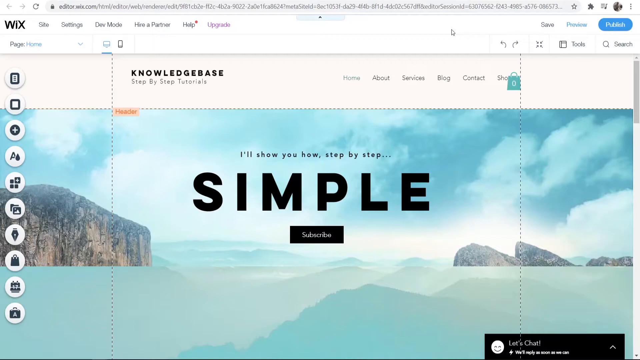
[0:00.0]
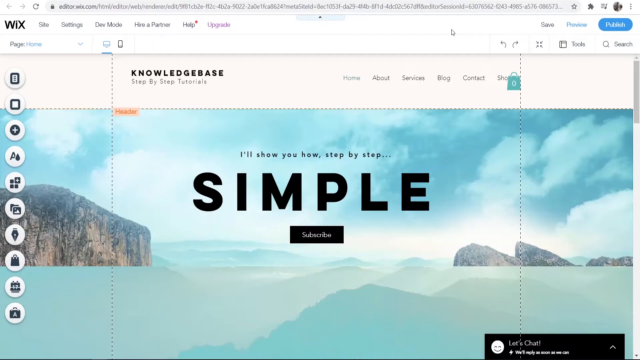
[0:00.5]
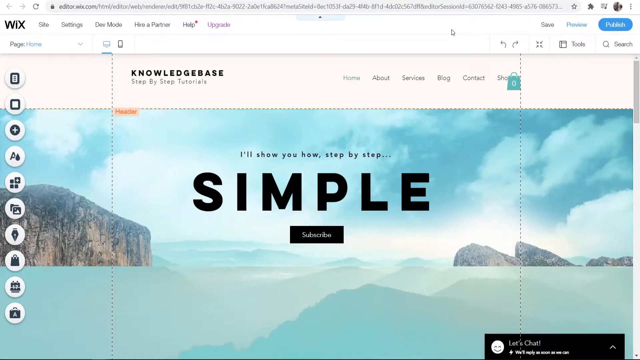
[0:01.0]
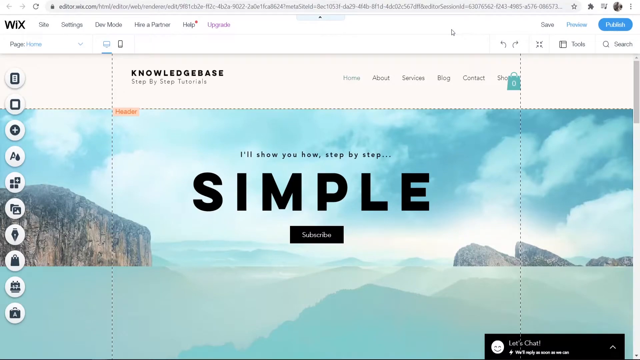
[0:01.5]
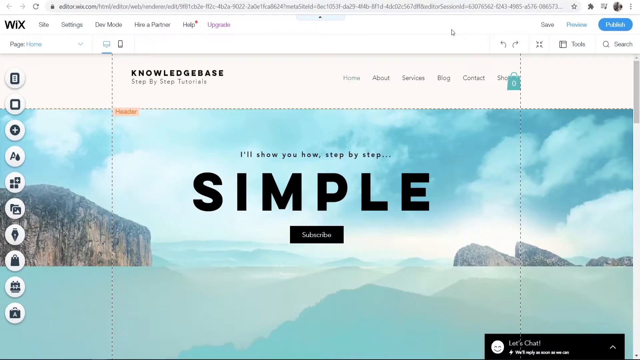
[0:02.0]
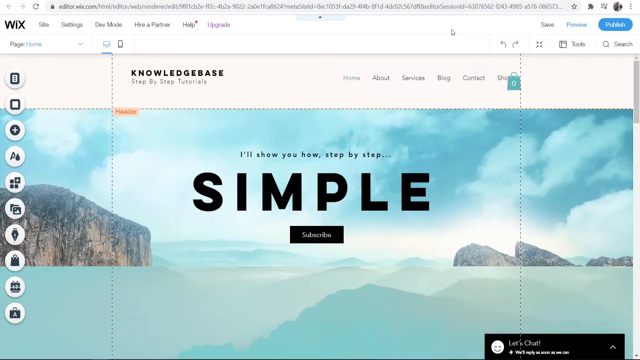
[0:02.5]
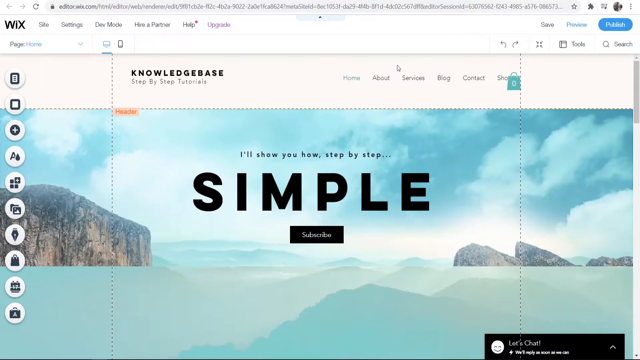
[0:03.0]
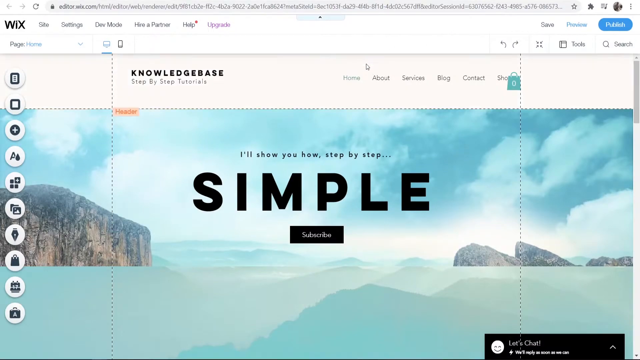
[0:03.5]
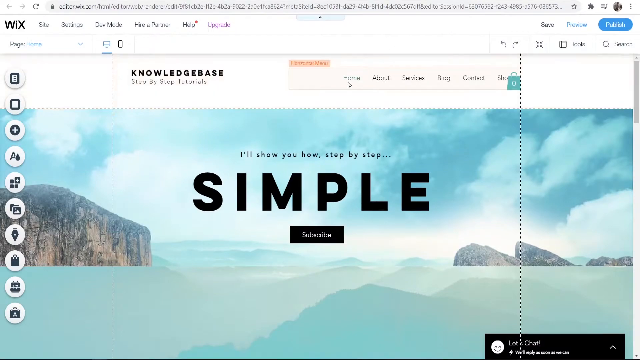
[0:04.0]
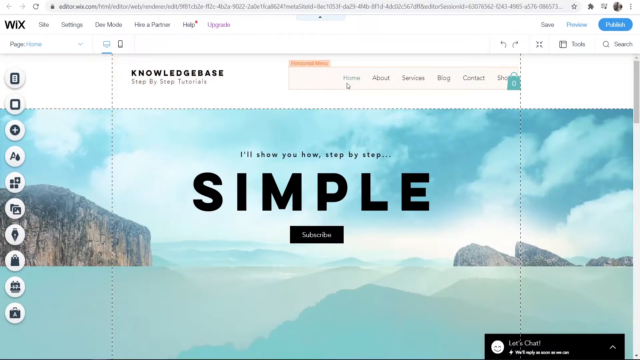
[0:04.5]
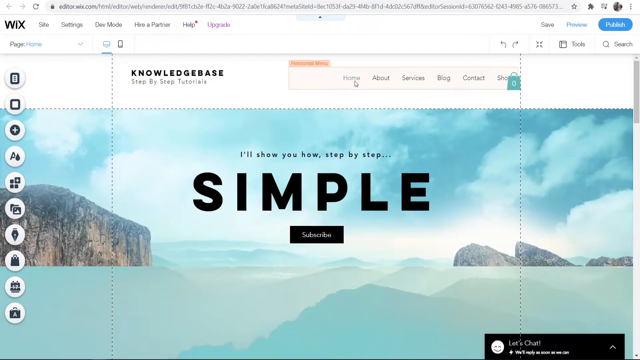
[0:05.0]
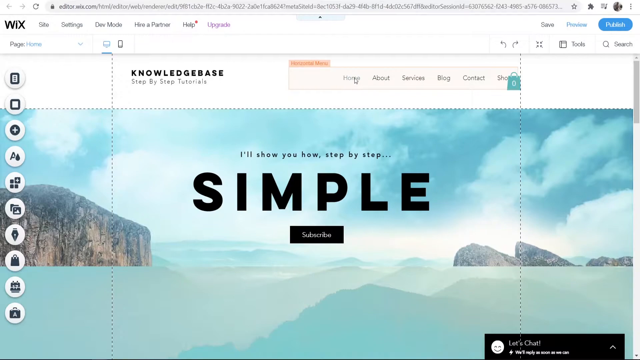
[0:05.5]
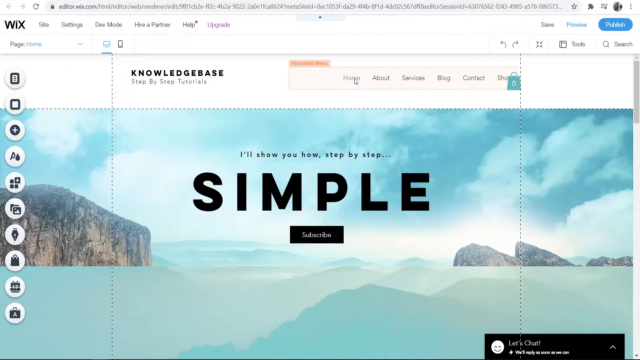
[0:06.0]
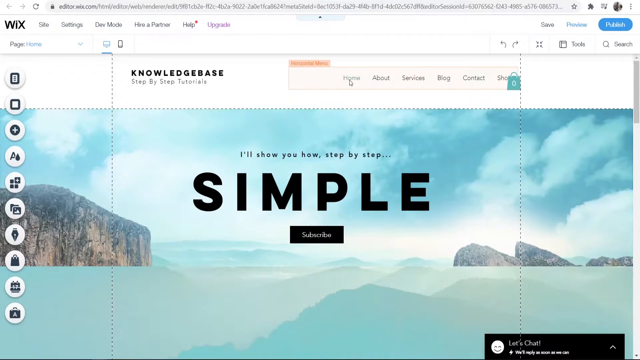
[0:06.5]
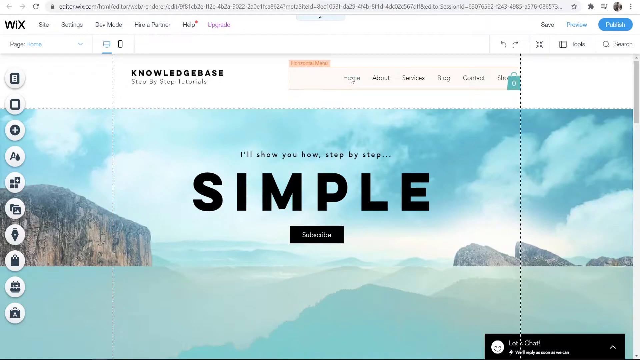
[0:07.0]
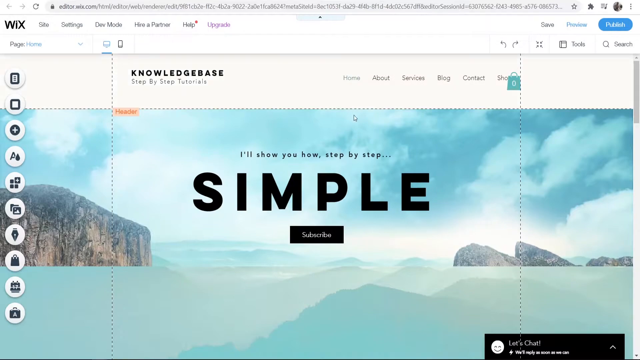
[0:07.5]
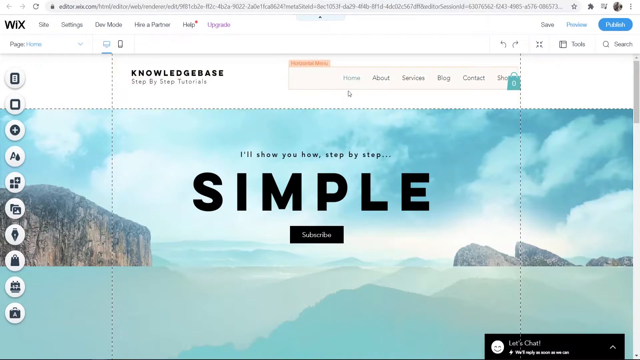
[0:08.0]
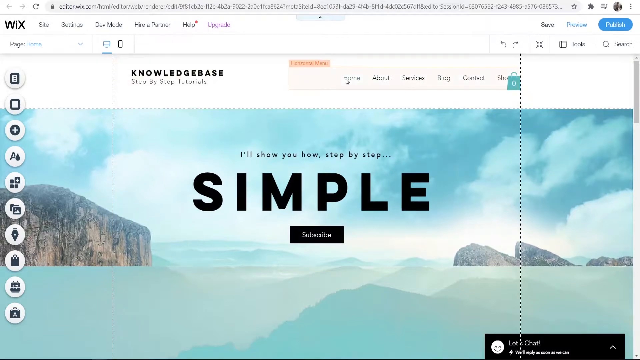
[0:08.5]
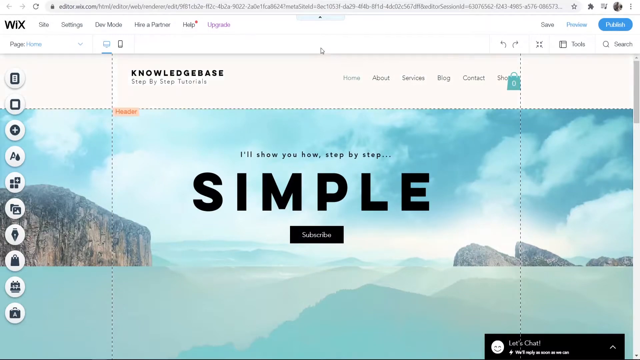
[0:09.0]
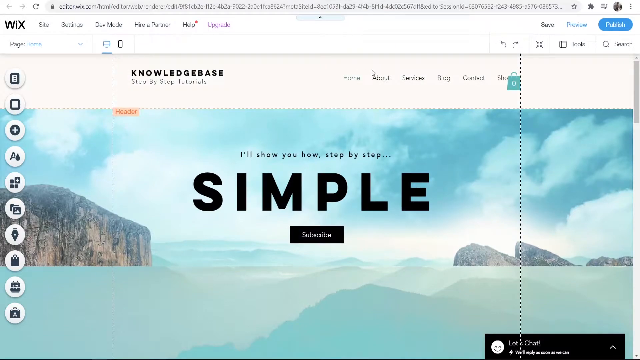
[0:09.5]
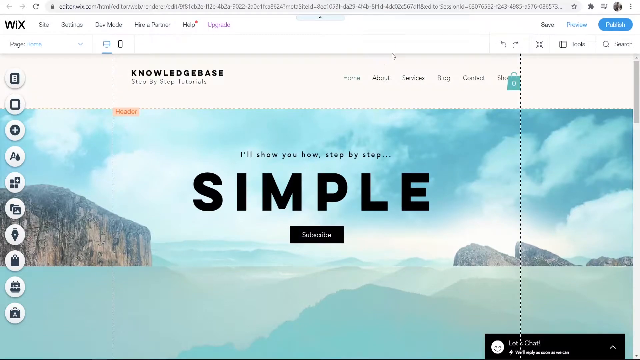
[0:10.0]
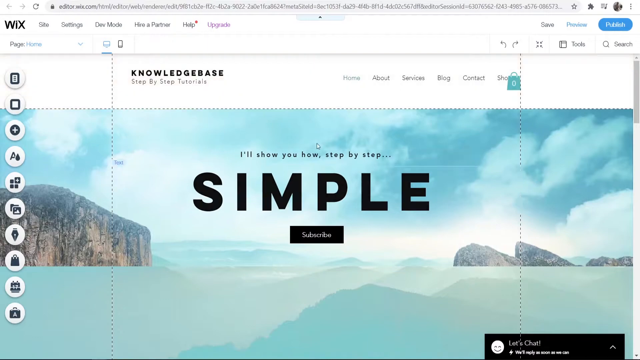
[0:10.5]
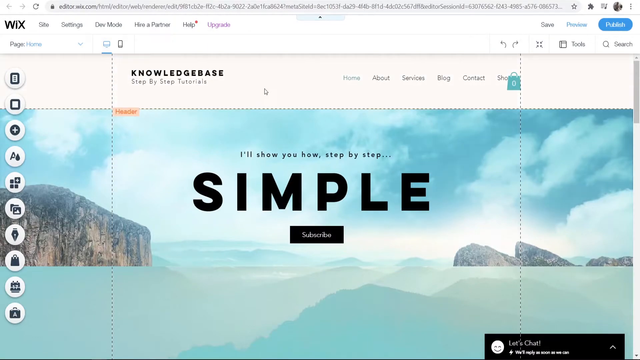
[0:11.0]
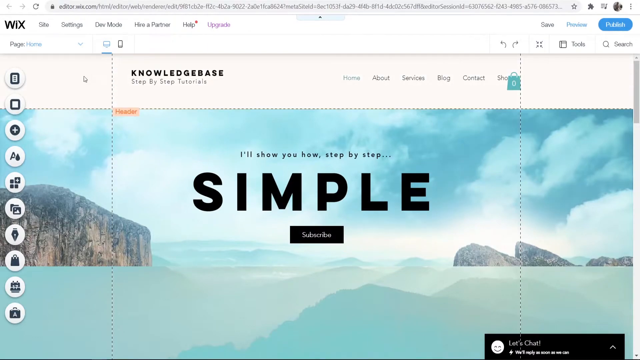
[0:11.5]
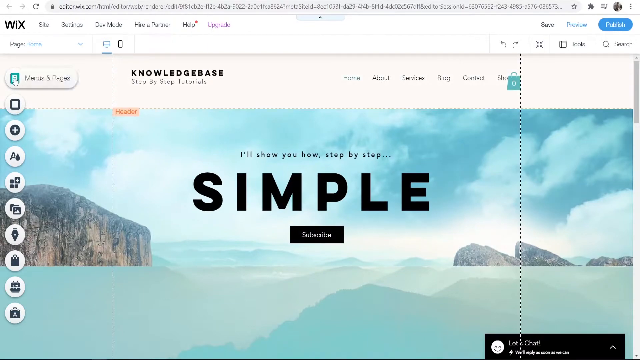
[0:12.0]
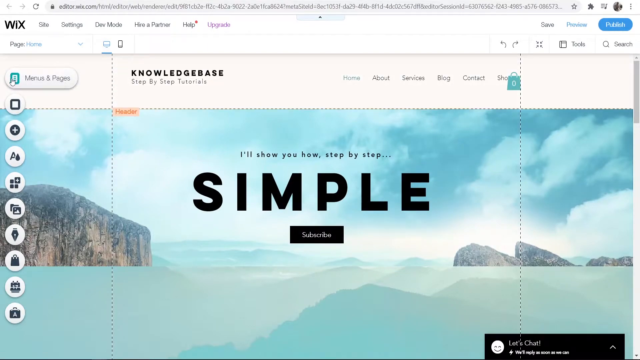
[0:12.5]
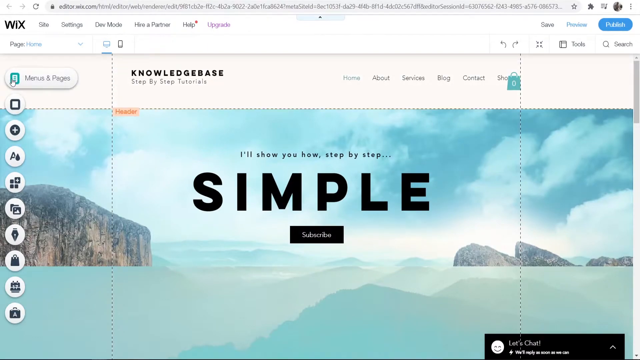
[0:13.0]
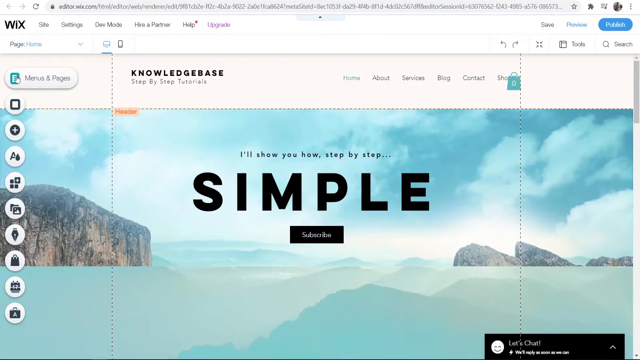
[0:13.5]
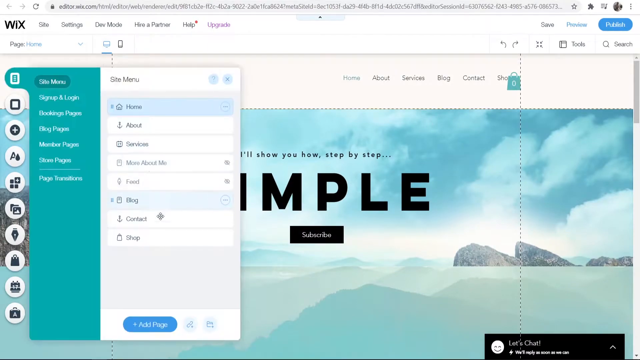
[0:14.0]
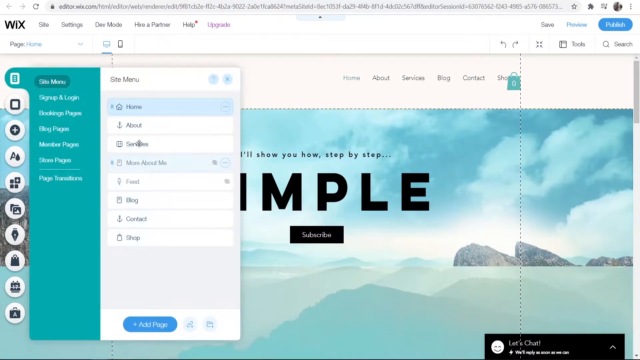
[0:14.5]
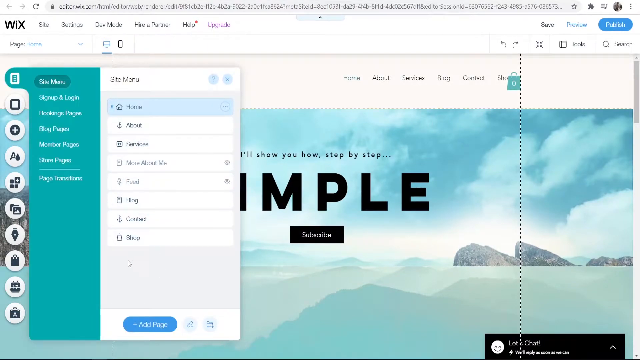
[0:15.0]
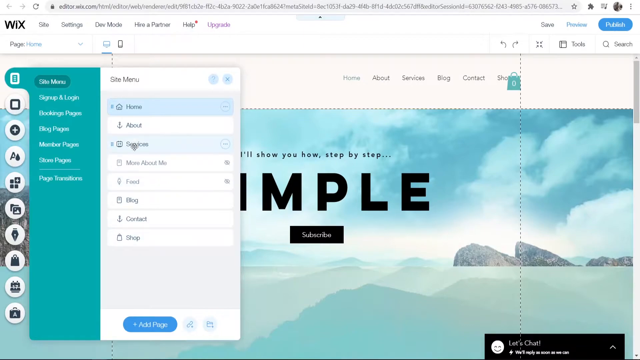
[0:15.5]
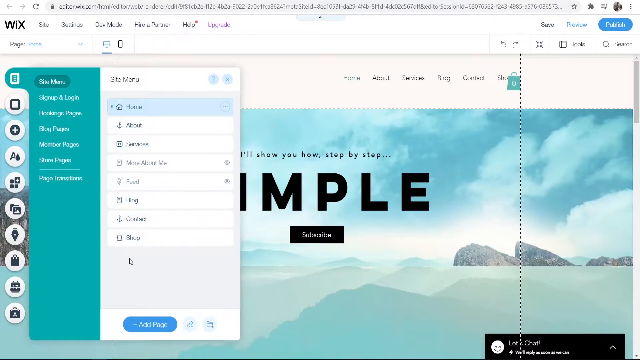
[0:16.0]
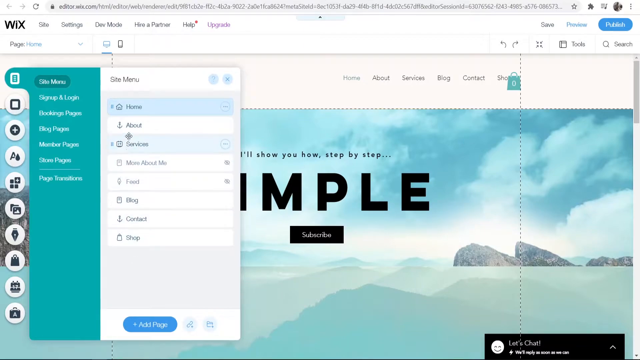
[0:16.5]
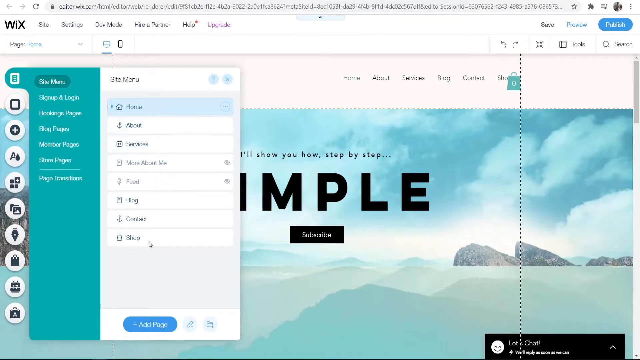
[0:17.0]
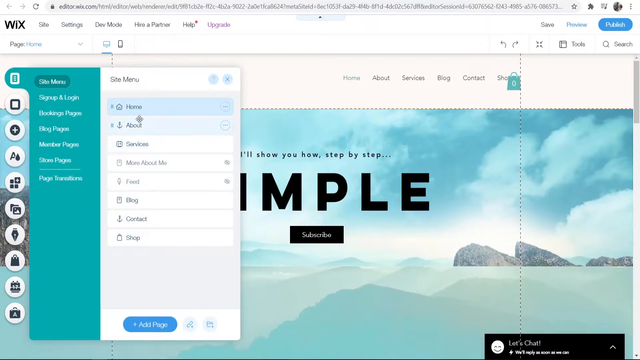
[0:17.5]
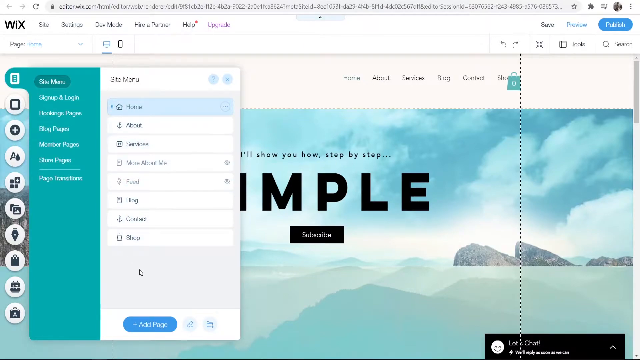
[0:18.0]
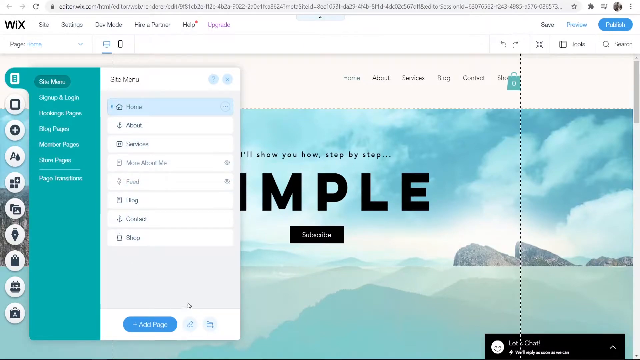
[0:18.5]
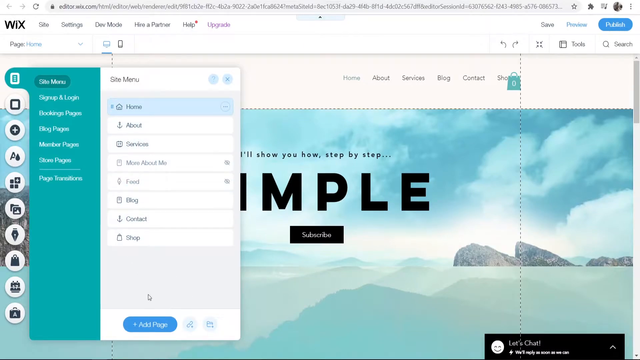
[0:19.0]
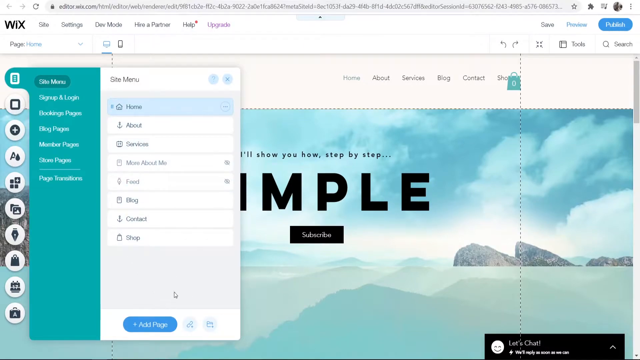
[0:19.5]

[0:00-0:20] What appears to be a website comes up, dominated by an image of a sky. It looks like the view is from a mountaintop slightly above the clouds, with the peaks of other mountaintops visible. In bold black letters is the word "SIMPLE", and above it in small print is "I'll show you how step by step". Below both is a black subscribe box with white letters. The cursor goes to "Menus & pages" and a dropdown appears. On the left side is a teal dropdown with signups, bookings and various other items. Also on the left side is a white background with black letters listing subcategory options: home, about, services, more about me, feed, blog, contact and shop. The cursor appears to graze down over the options, almost selecting each one, but does not select any.